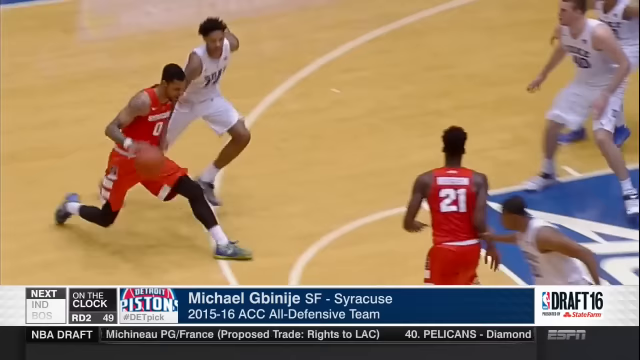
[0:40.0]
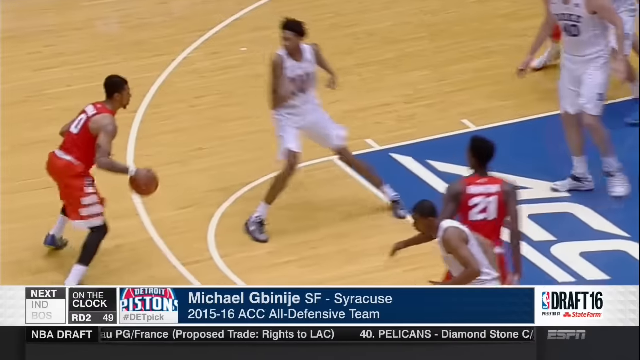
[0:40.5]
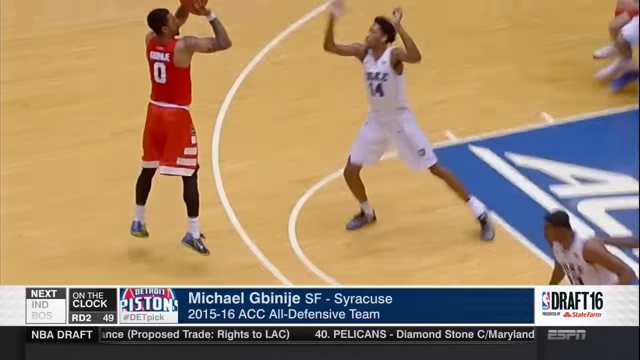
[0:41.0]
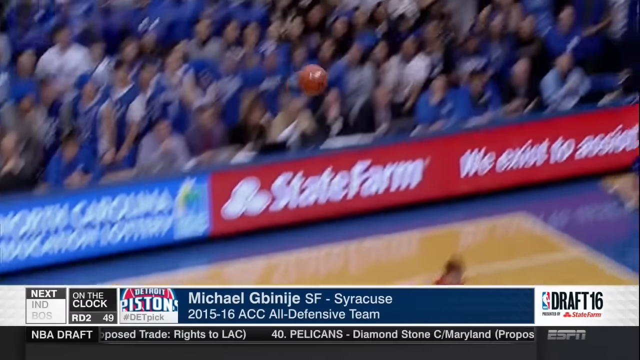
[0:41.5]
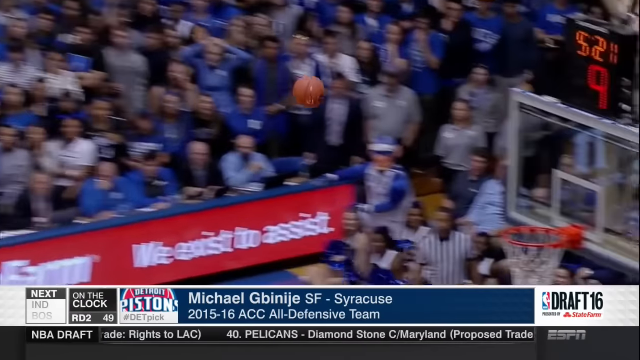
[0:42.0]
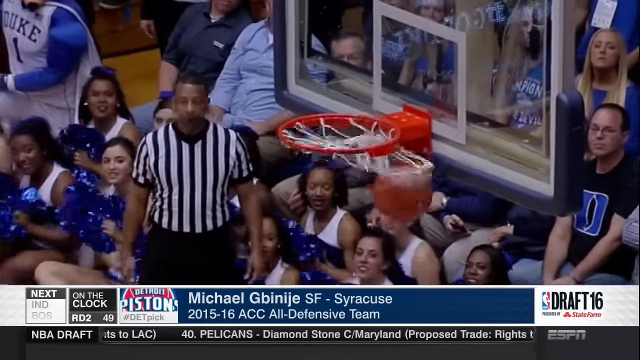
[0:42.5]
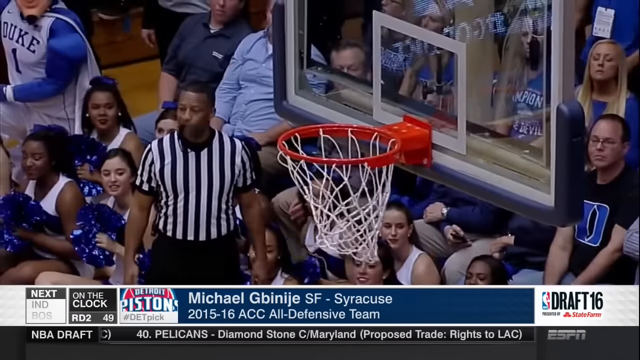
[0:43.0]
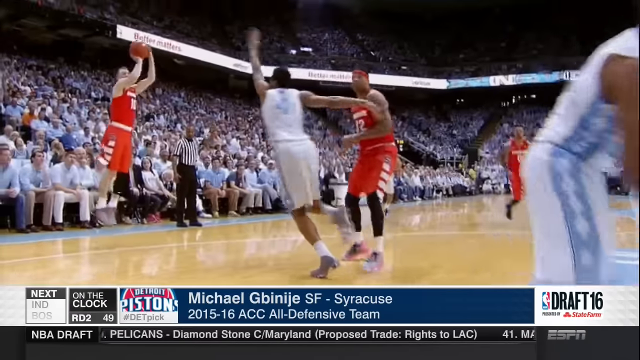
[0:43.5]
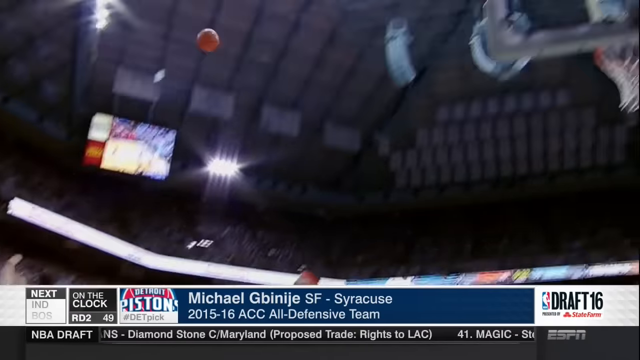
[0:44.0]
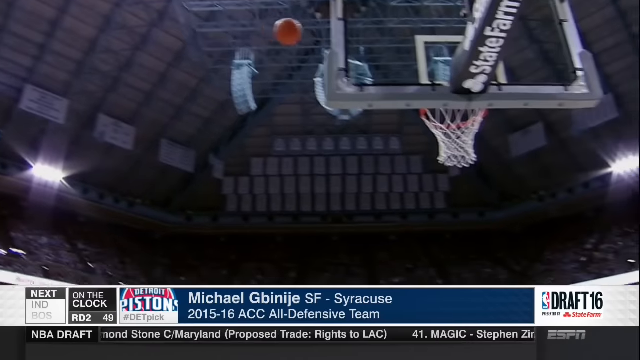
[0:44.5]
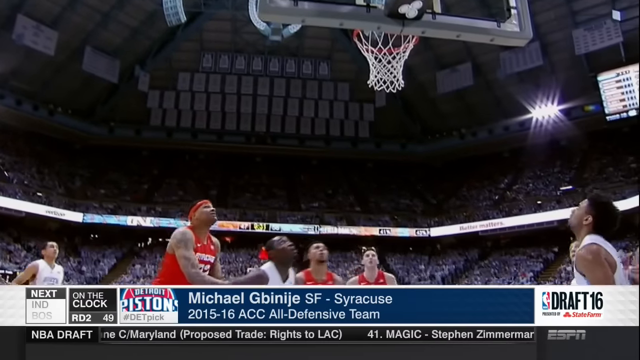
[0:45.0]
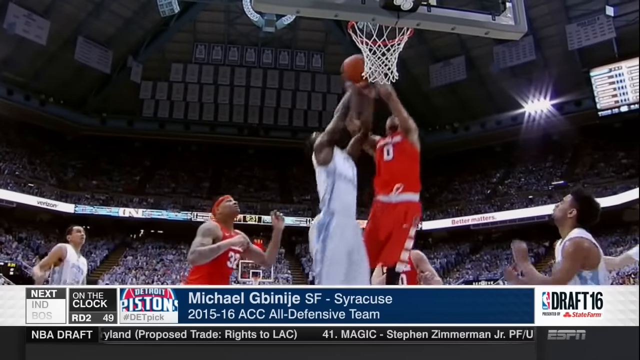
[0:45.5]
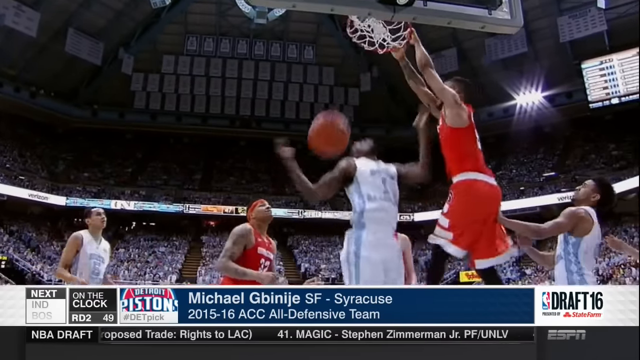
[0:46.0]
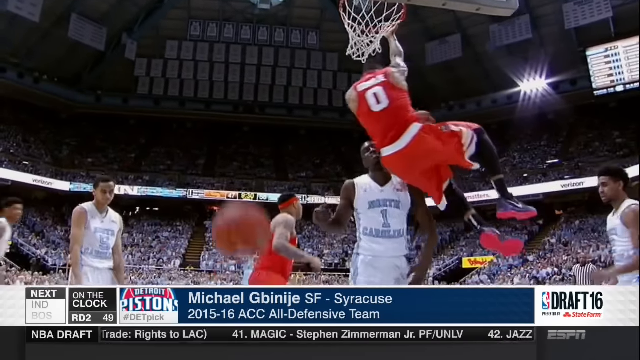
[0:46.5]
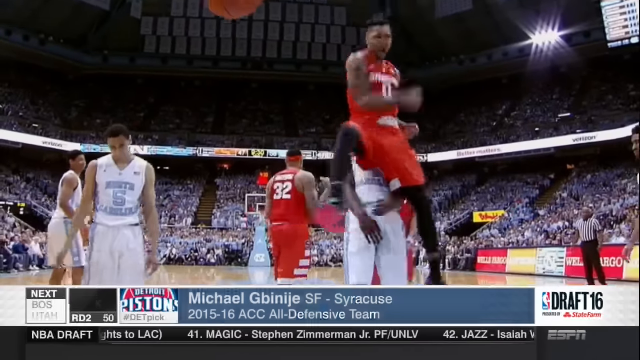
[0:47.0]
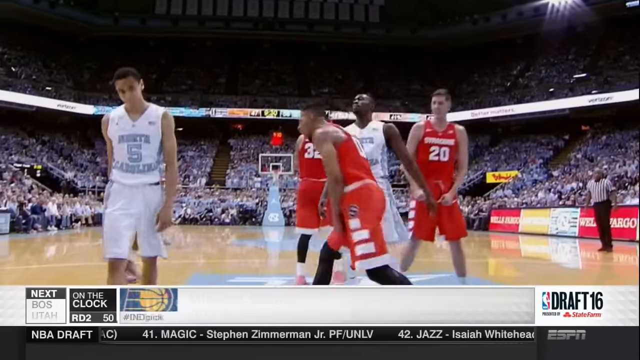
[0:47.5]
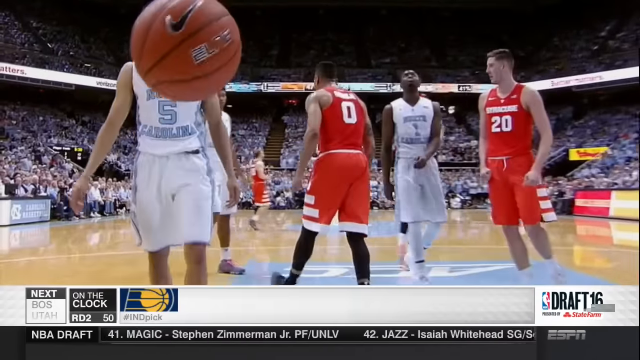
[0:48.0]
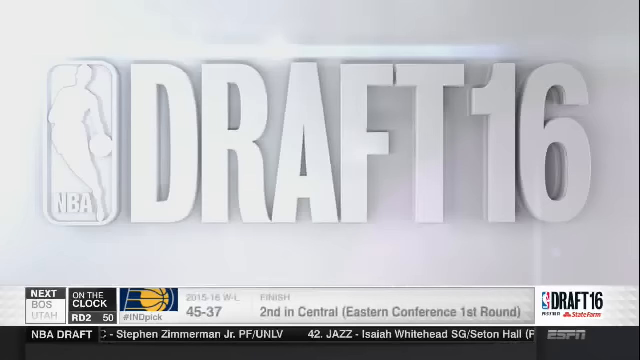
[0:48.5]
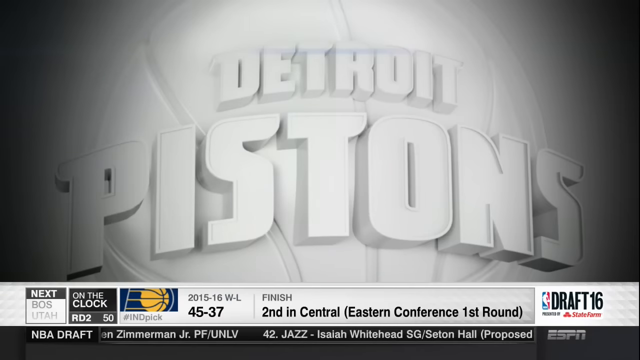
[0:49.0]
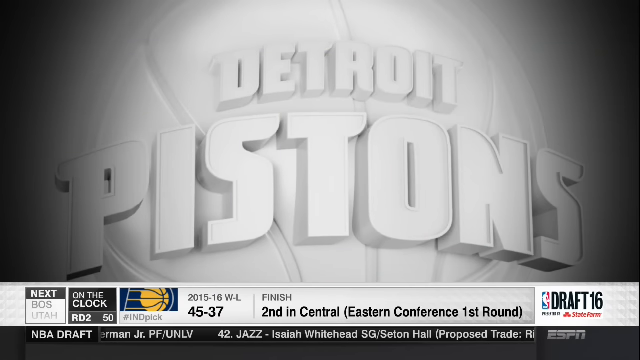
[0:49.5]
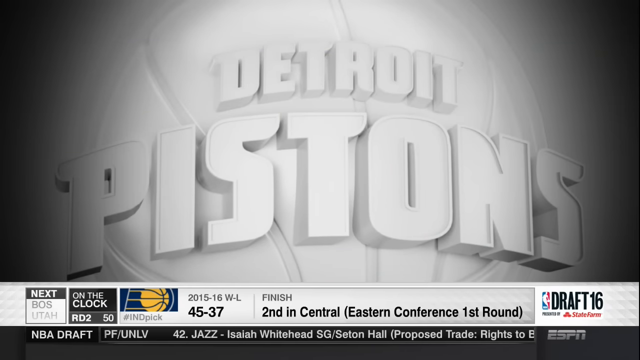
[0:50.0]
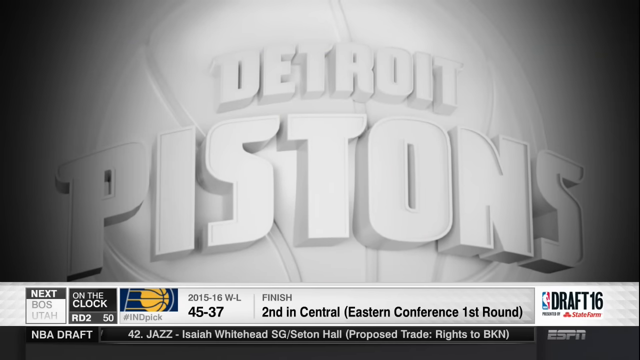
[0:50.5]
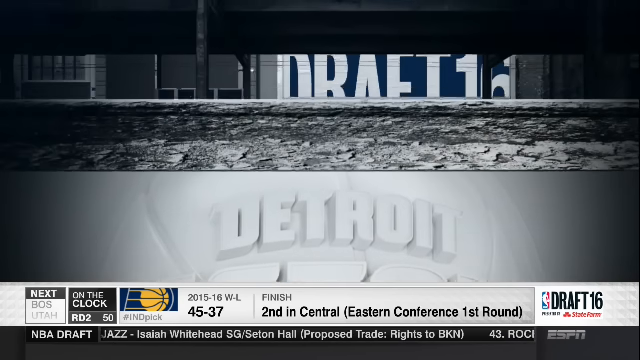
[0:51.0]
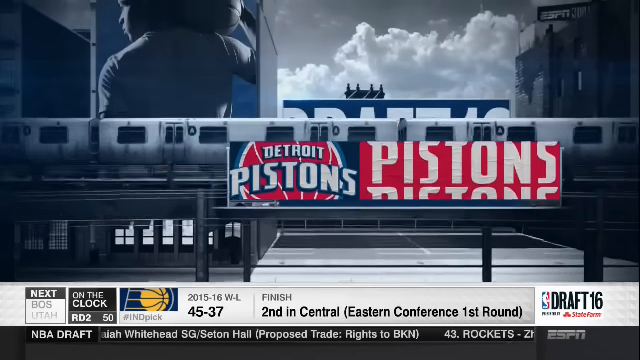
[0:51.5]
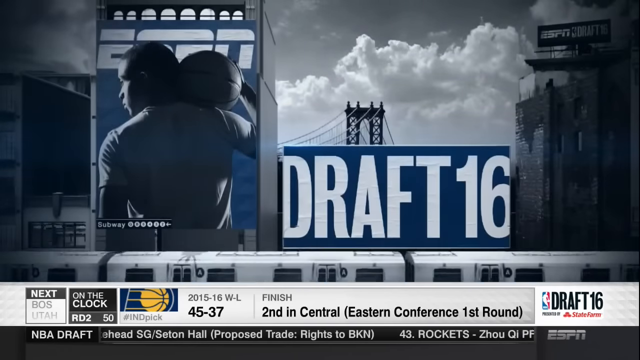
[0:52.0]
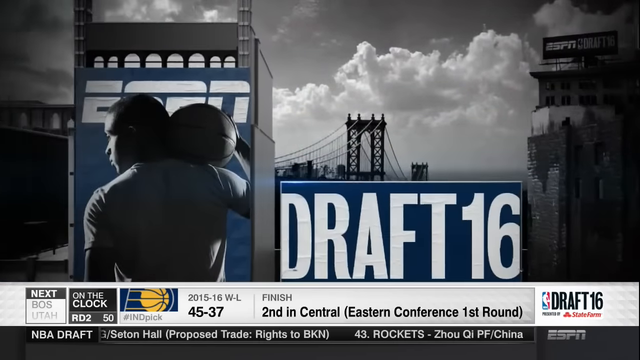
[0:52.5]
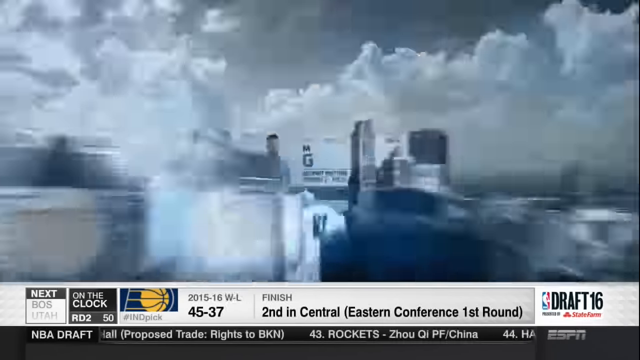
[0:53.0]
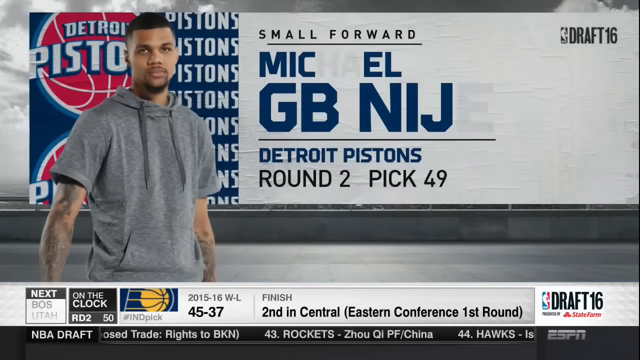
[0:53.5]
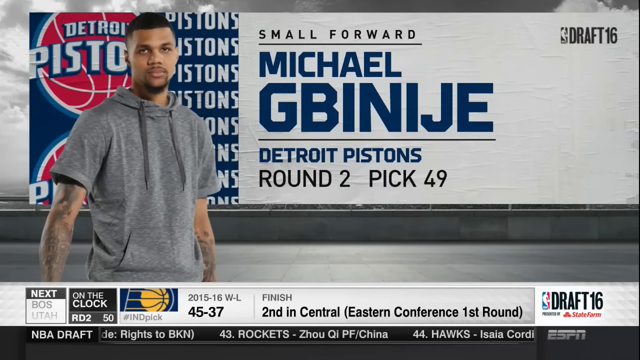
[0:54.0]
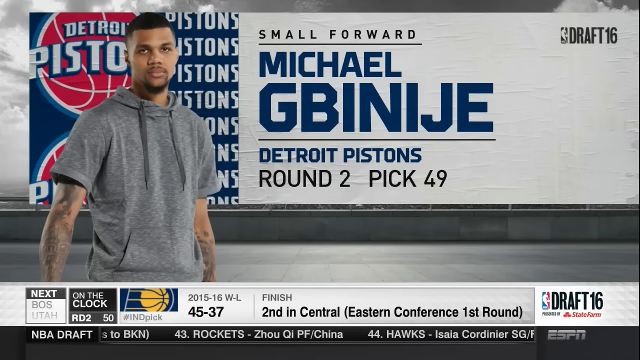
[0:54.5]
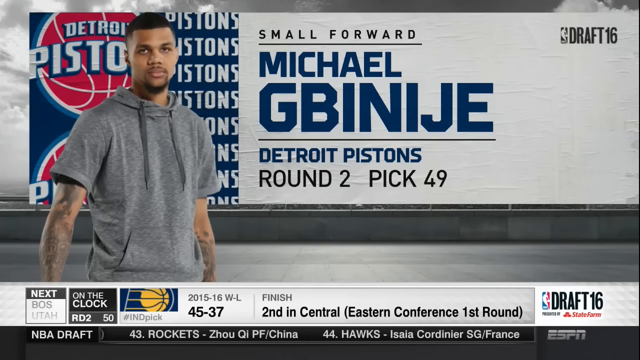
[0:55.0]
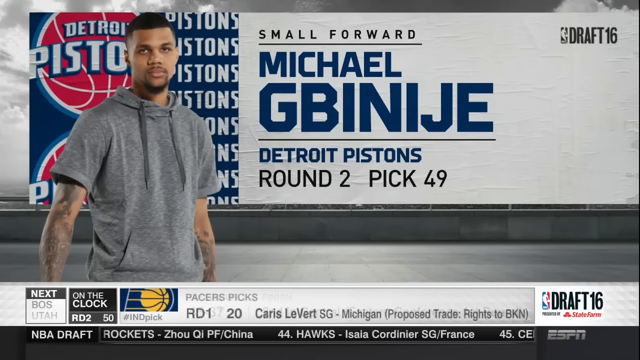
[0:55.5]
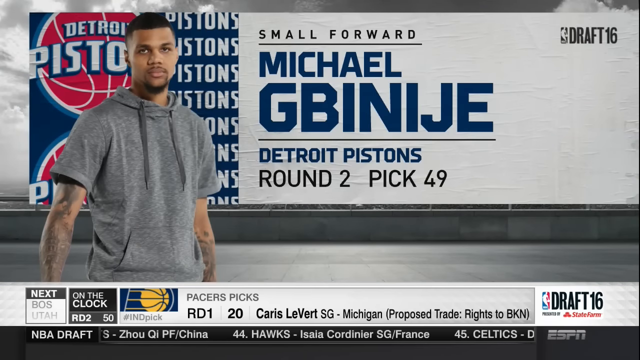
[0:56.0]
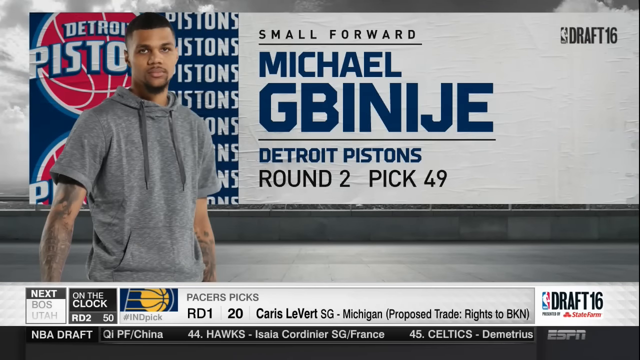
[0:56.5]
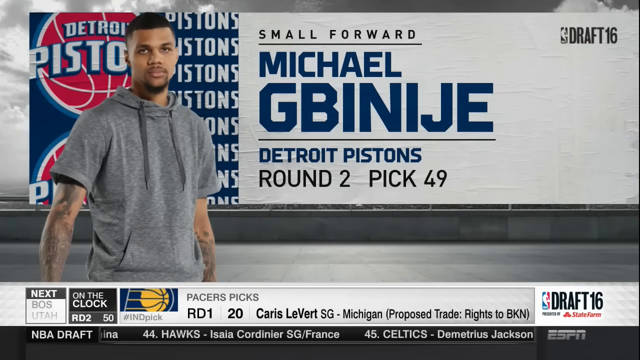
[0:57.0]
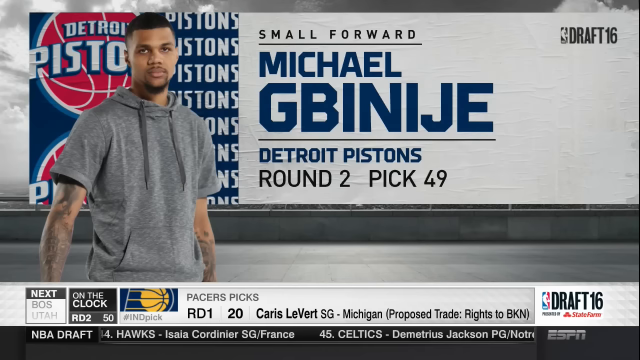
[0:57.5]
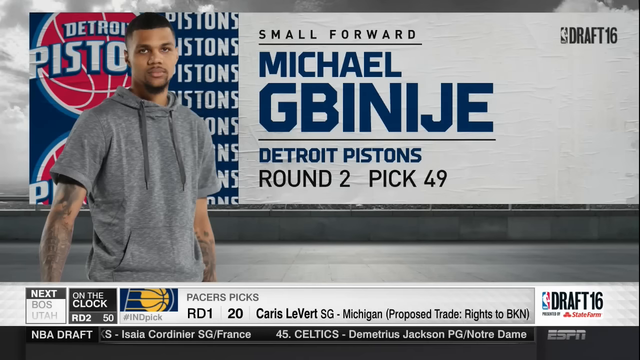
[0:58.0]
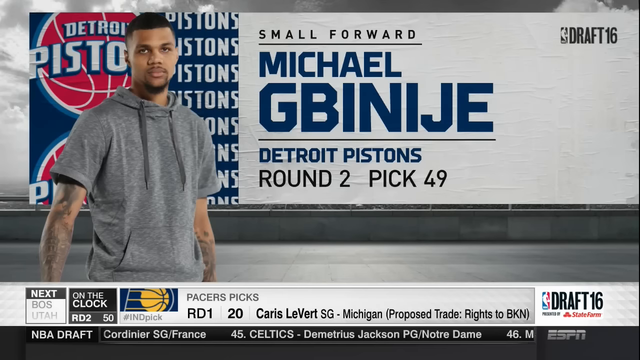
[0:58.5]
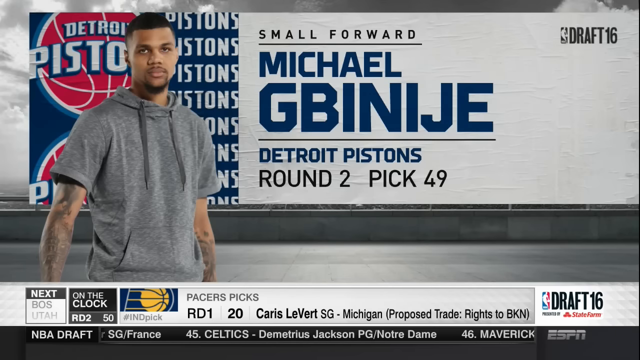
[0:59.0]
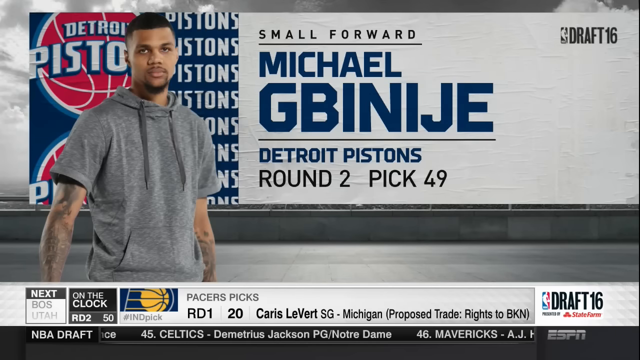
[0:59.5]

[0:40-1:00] Highlights of the player just selected by the Detroit Pistons continue from his college team. He appears in two different jerseys, one mostly orange with white and one mostly white with orange, at home and away games. He dribbles quickly, apparently makes a three-pointer, then another basket that looks like two points, helps a teammate get the ball, and makes a slam dunk. The segment ends with "Detroit Pistons" and Michael identified as the round two, pick 49 selection.